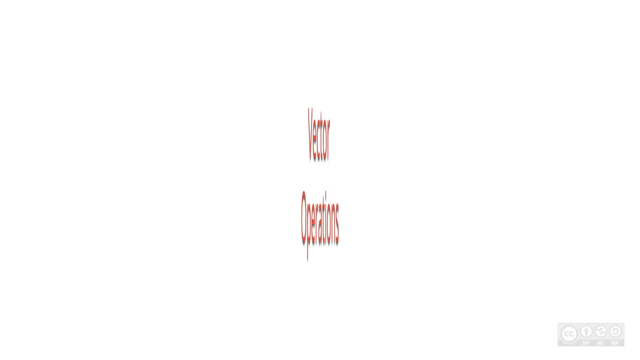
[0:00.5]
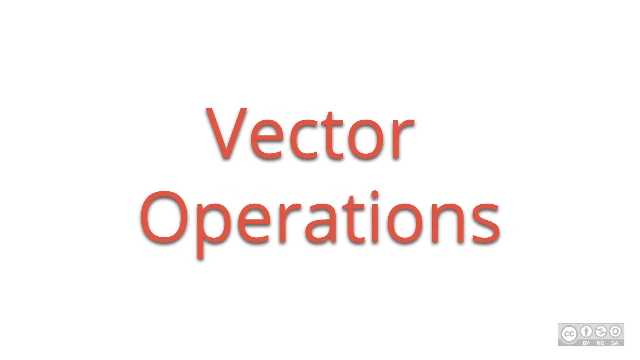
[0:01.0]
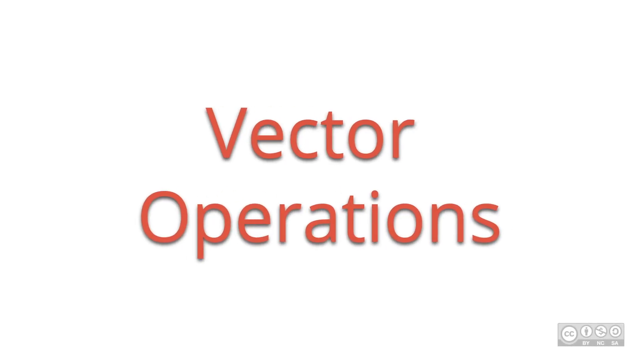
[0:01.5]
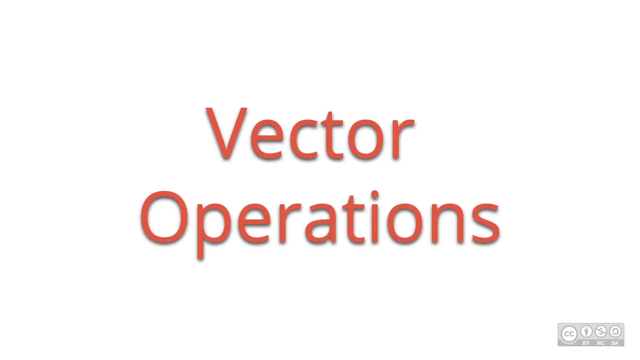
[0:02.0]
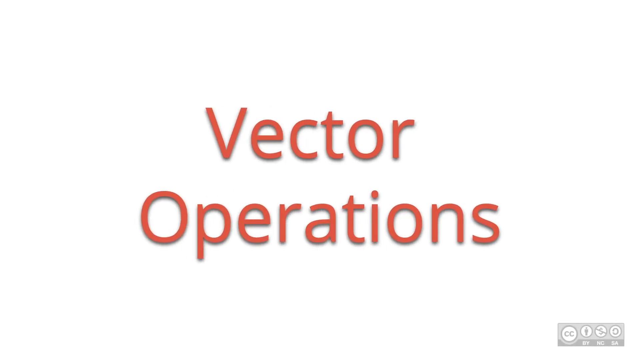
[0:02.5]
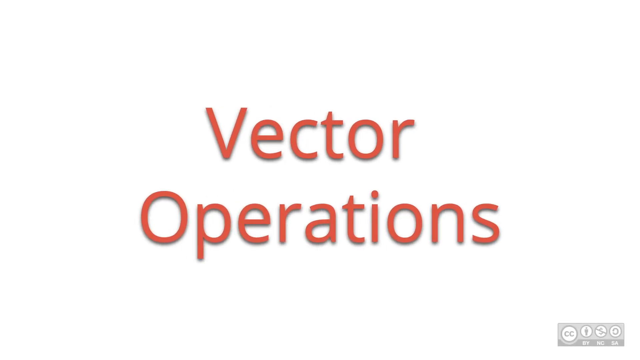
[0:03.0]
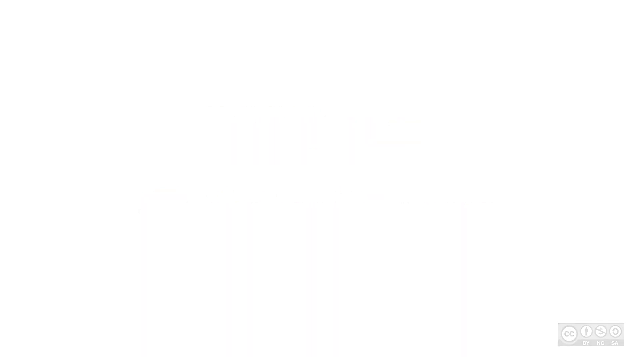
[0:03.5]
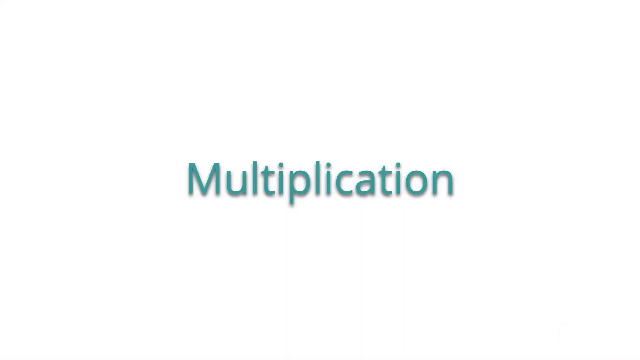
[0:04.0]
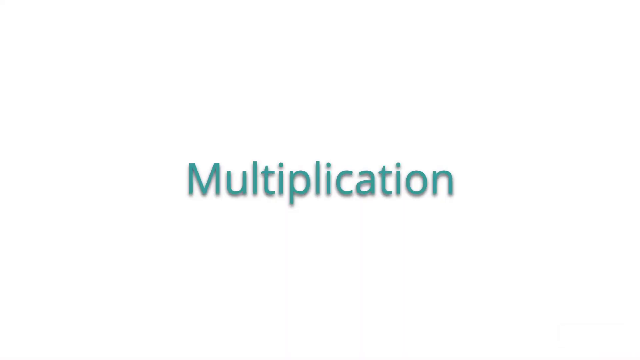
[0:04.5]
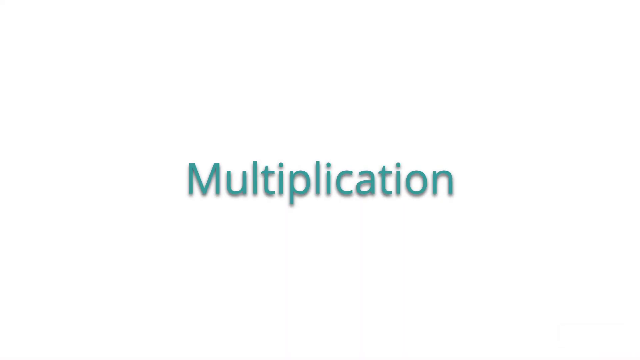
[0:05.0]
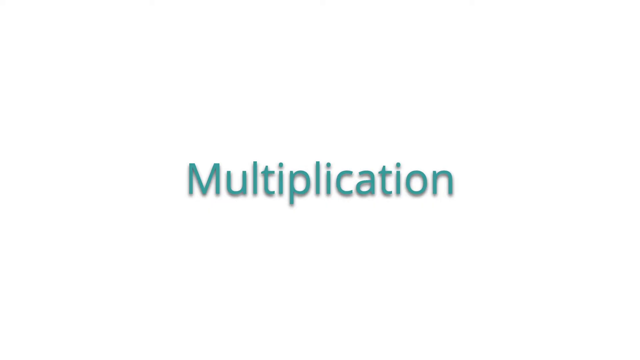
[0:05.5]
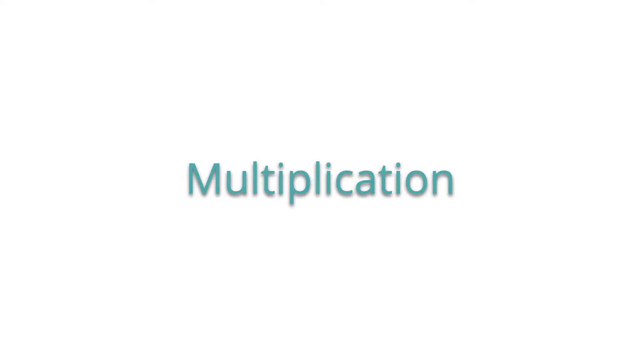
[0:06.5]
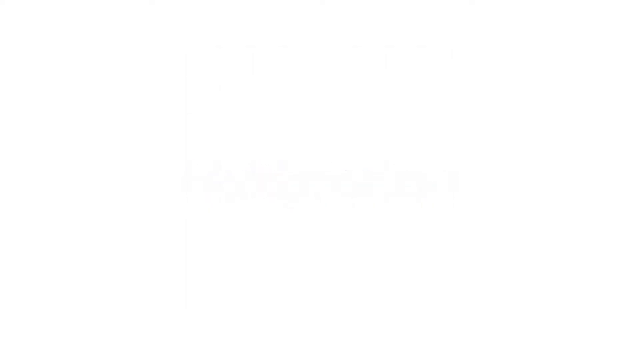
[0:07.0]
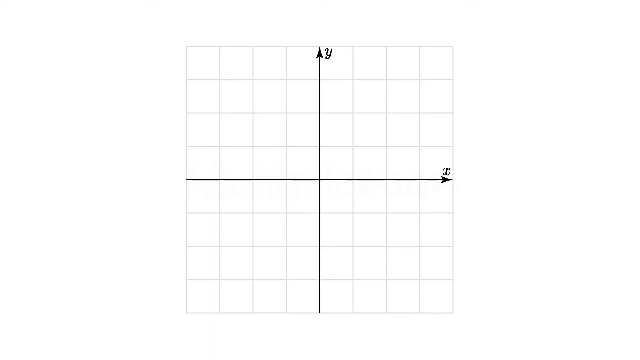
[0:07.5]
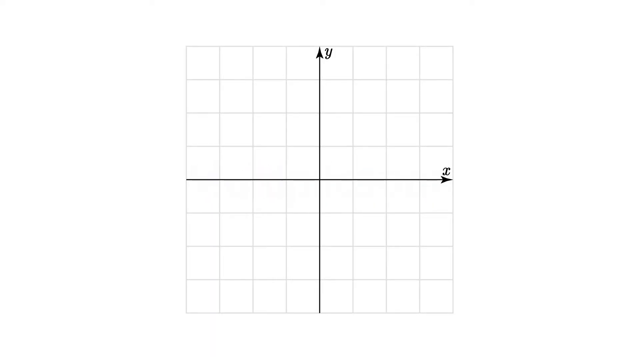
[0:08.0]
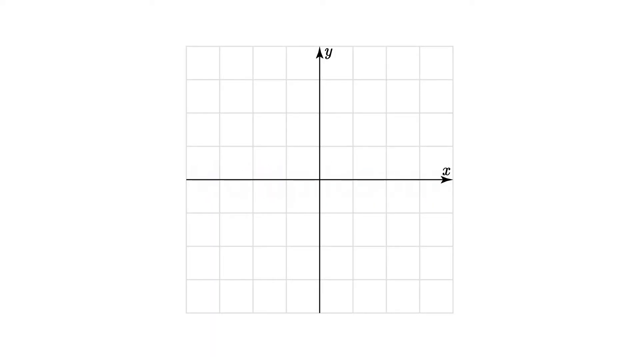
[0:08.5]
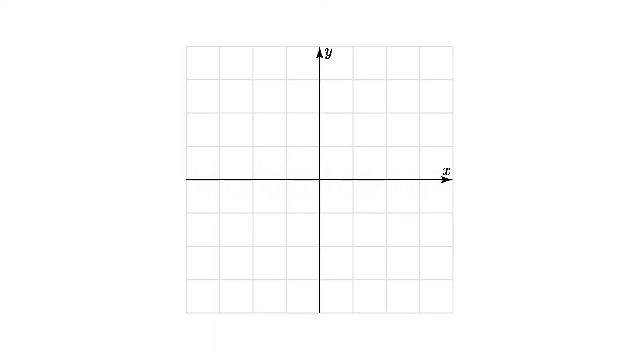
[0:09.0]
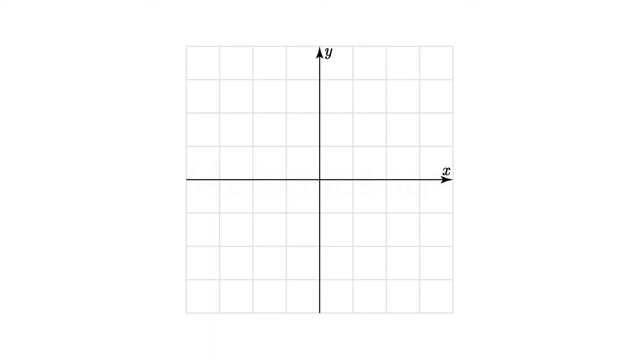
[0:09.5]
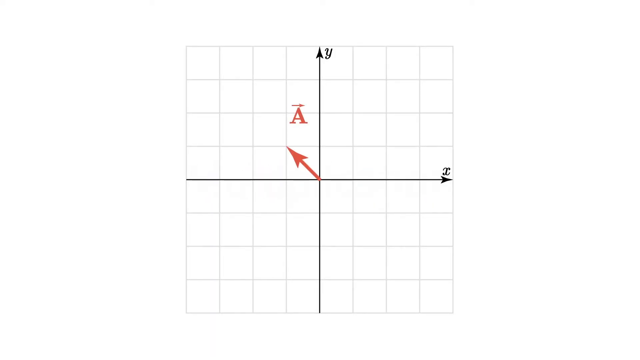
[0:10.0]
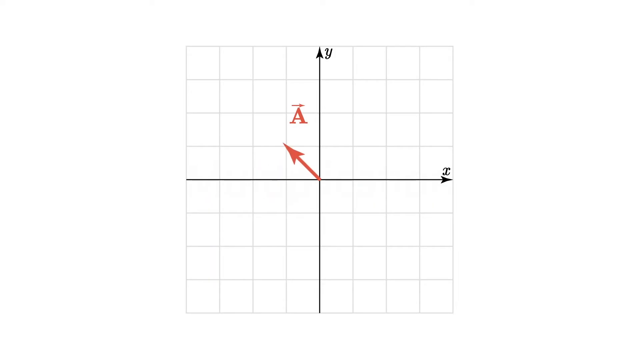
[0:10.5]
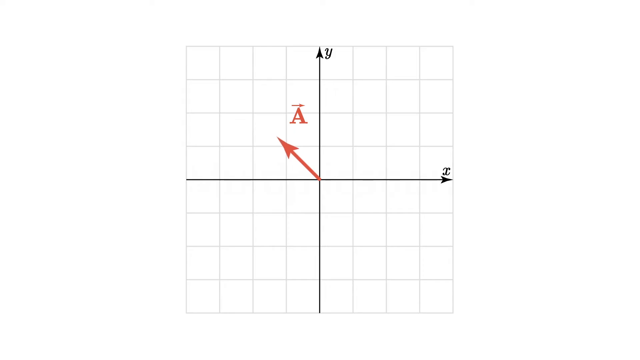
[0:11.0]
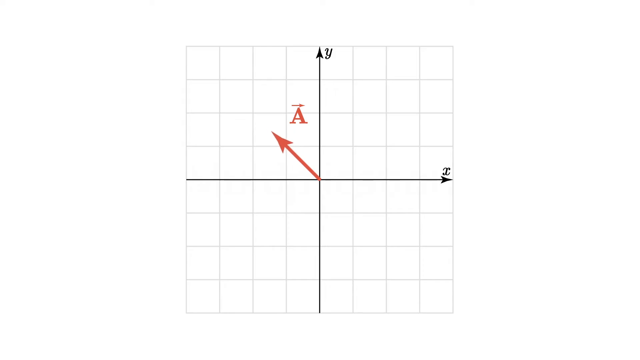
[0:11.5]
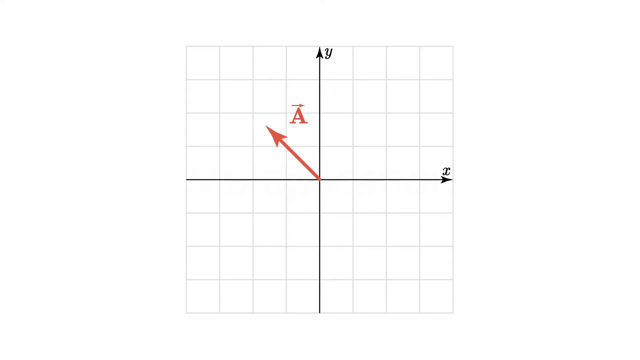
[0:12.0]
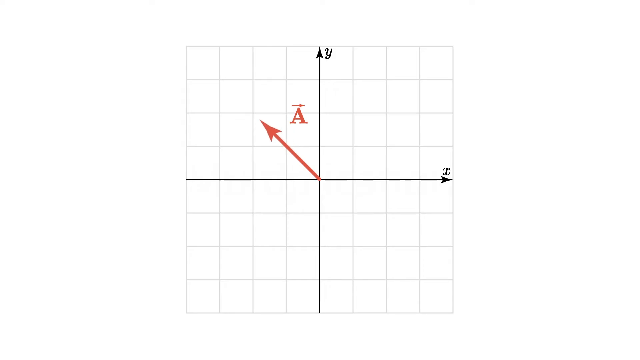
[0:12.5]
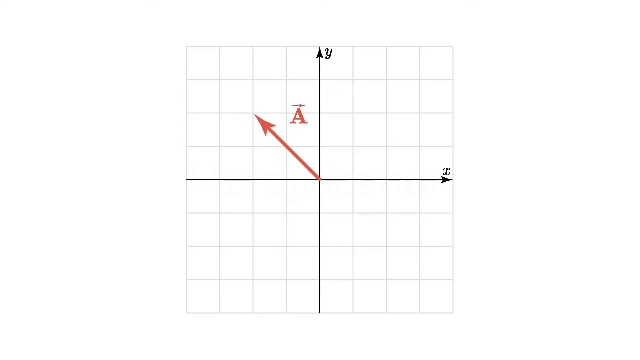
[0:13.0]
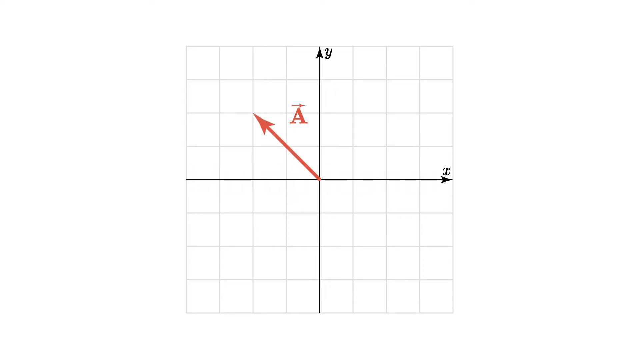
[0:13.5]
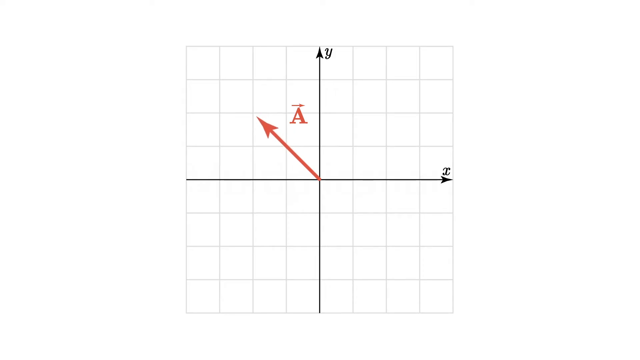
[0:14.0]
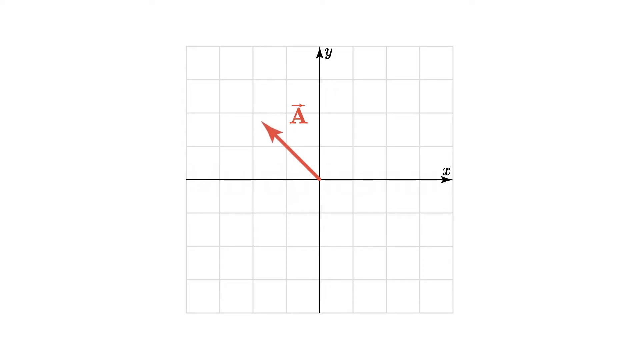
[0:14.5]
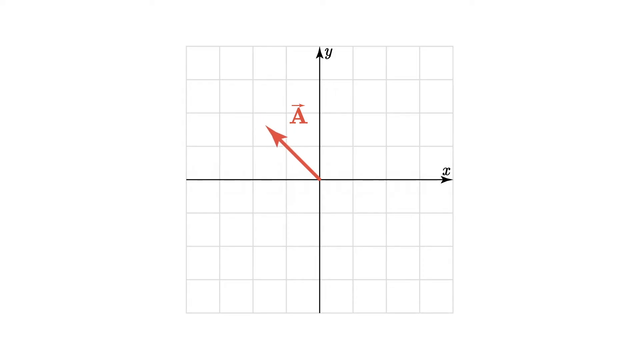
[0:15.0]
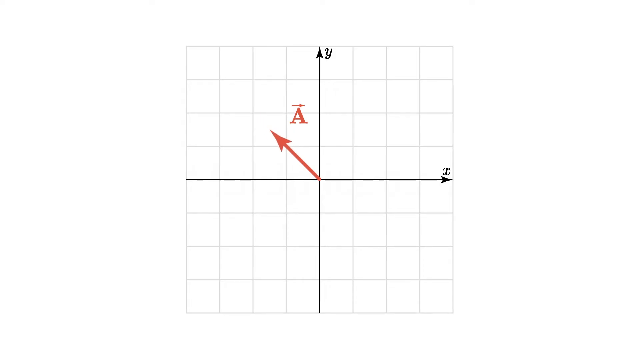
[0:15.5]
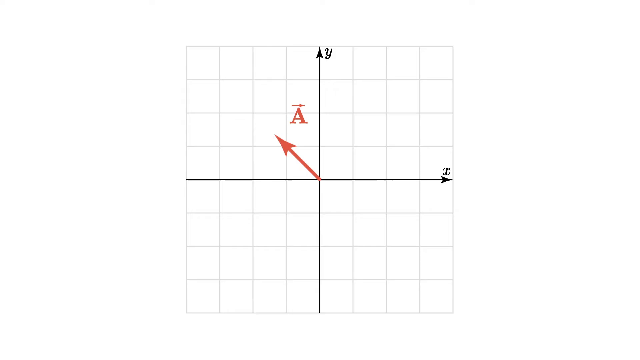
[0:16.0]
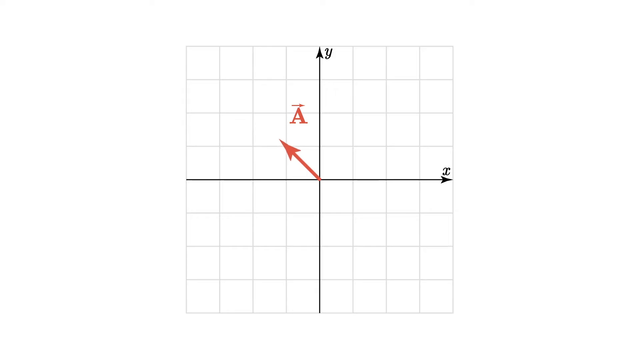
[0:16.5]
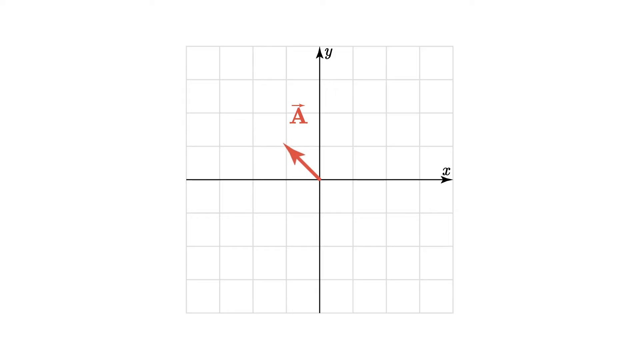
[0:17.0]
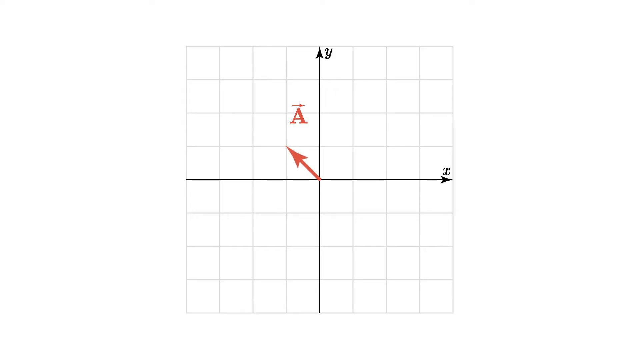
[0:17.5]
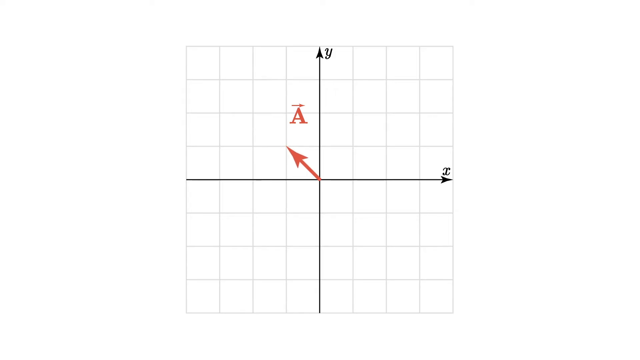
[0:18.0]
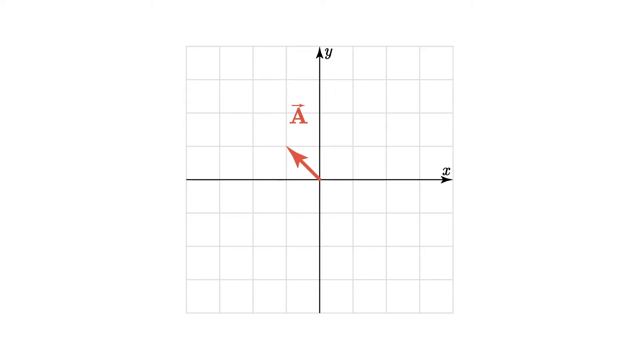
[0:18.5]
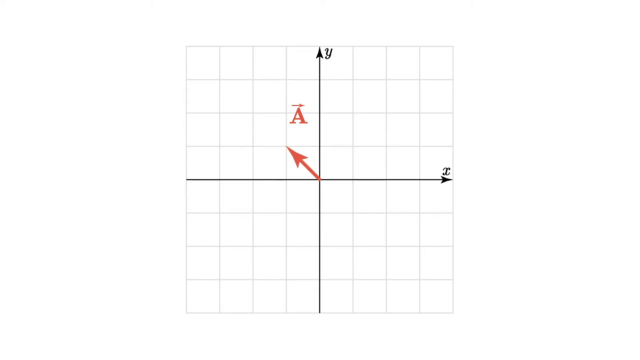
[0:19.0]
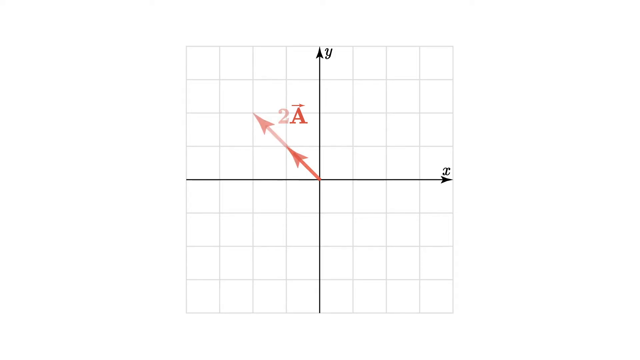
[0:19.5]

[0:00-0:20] This science video, entitled Vector Operations, has a white background, with the word "vector" in a sort of rust color in the middle. The screen then switches to "multiplication", shown in teal. Next comes a square of graph paper, eight squares across and eight squares vertically, with an x and y axis whose x and y labels look sort of italicized. Something pops out of what is apparently the negative part of x and y: a capital A with an arrow going to the right. From the origin, diagonally in the first square, there is a big rust-colored arrow; it grows through two boxes, shrinks back down to one, then goes up to two, with a rust-colored "2A", and stops.